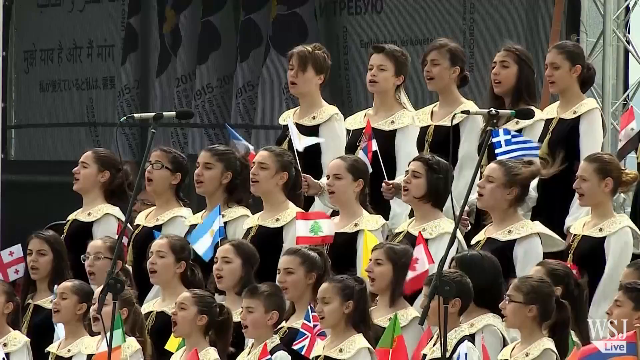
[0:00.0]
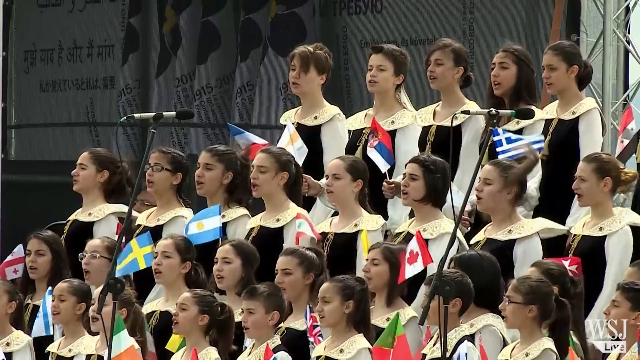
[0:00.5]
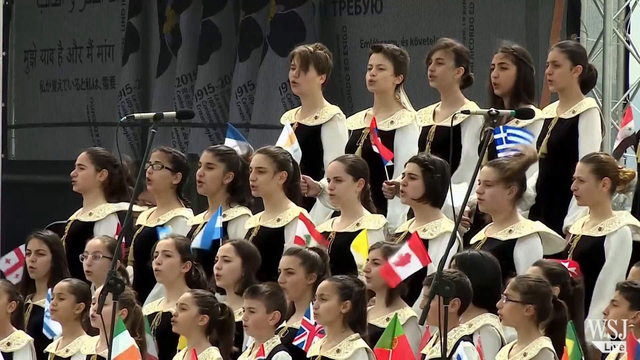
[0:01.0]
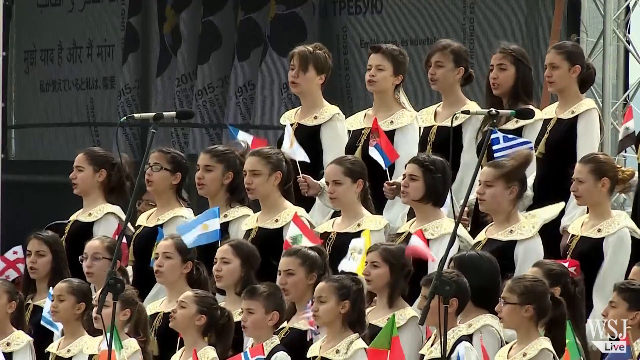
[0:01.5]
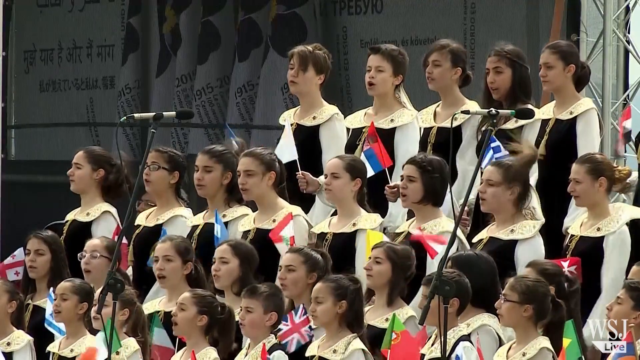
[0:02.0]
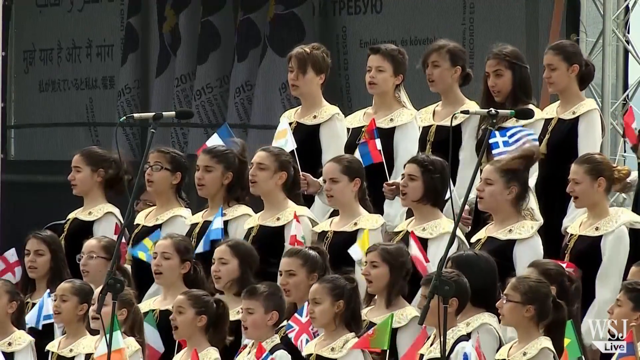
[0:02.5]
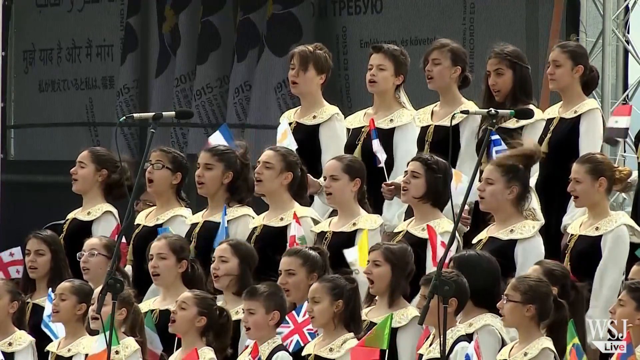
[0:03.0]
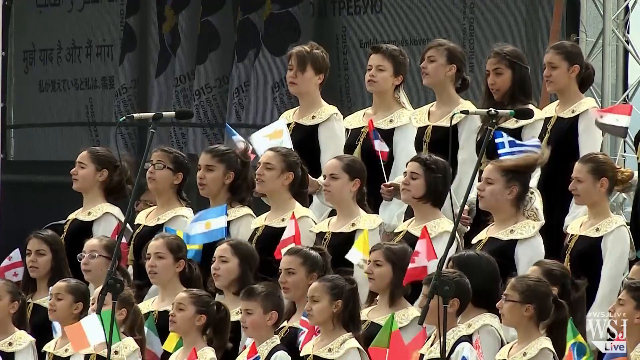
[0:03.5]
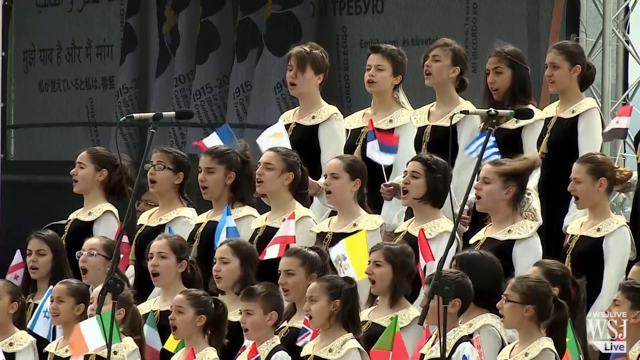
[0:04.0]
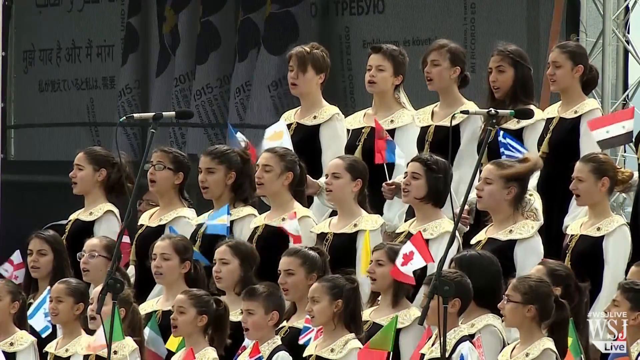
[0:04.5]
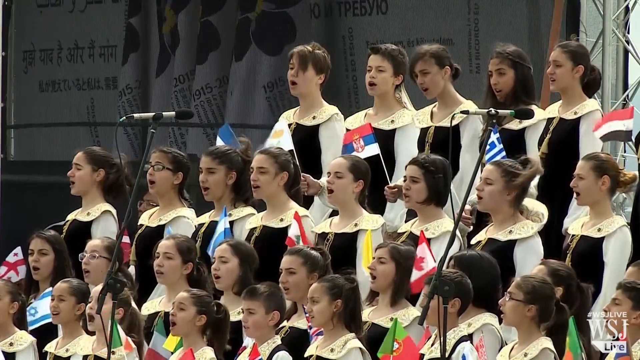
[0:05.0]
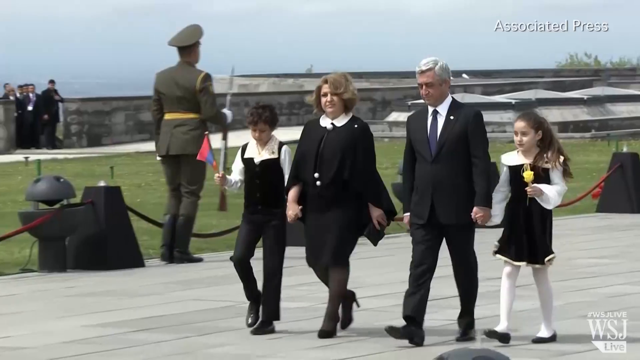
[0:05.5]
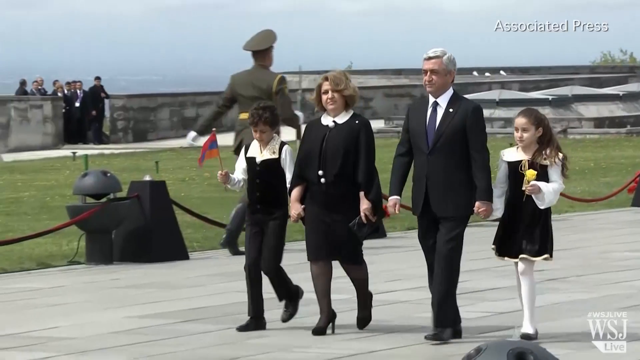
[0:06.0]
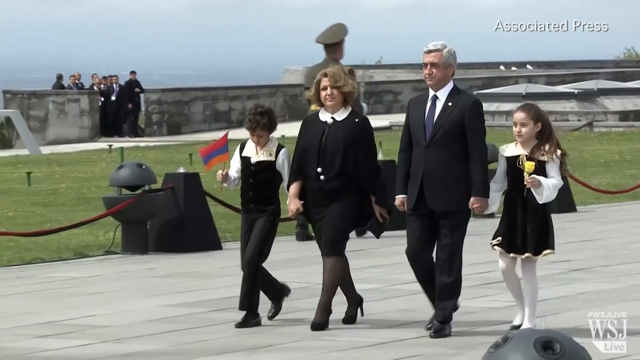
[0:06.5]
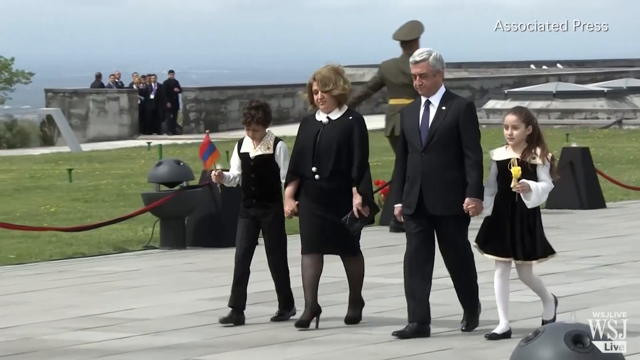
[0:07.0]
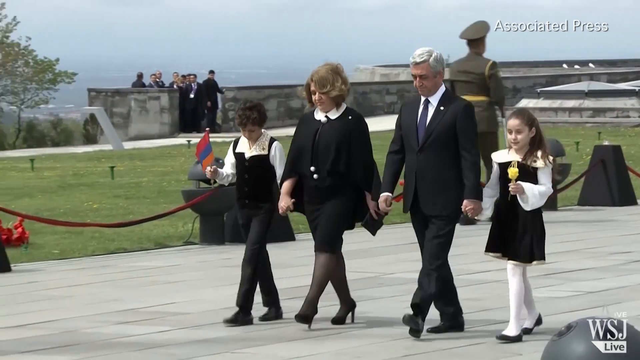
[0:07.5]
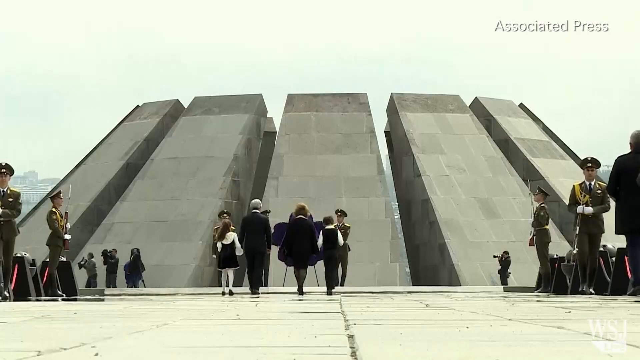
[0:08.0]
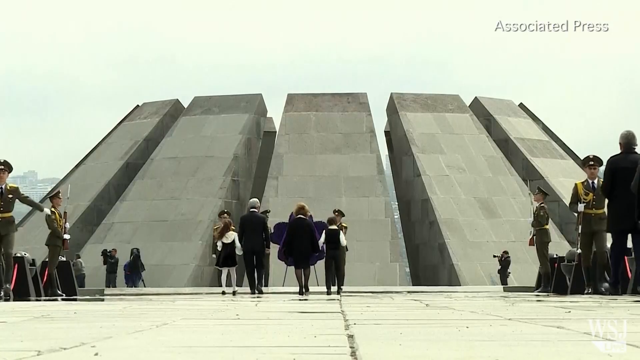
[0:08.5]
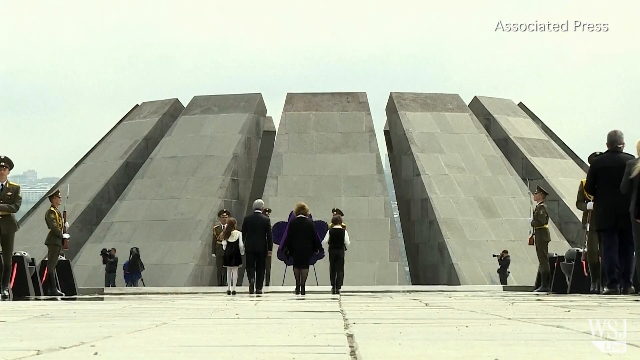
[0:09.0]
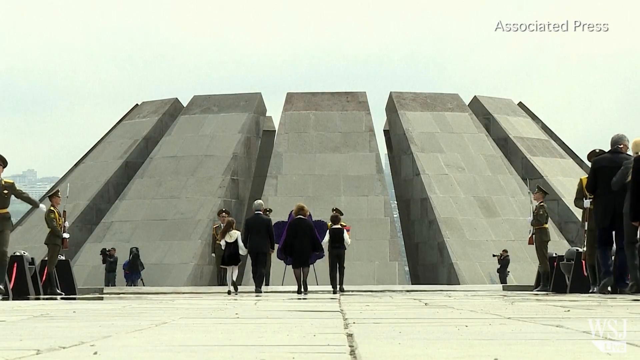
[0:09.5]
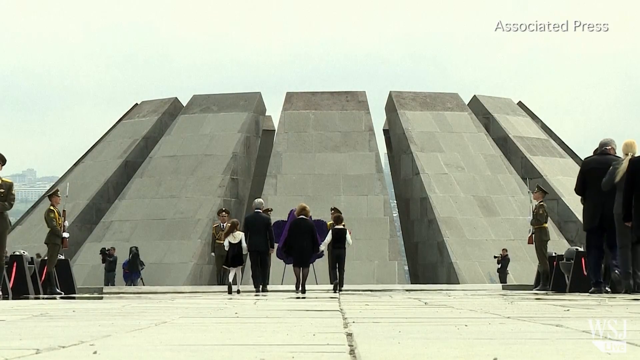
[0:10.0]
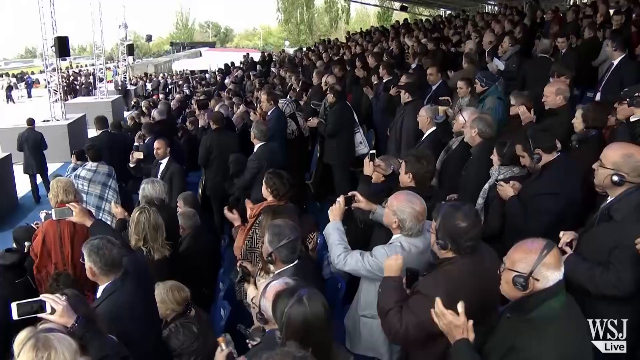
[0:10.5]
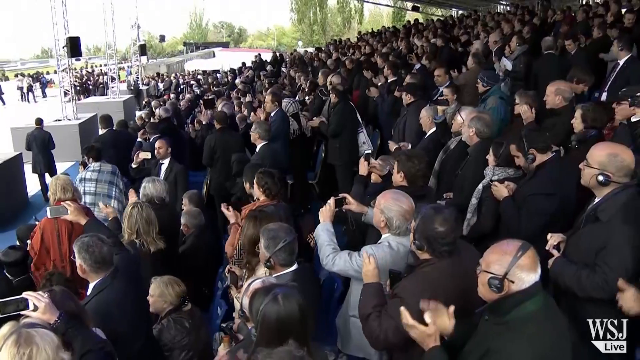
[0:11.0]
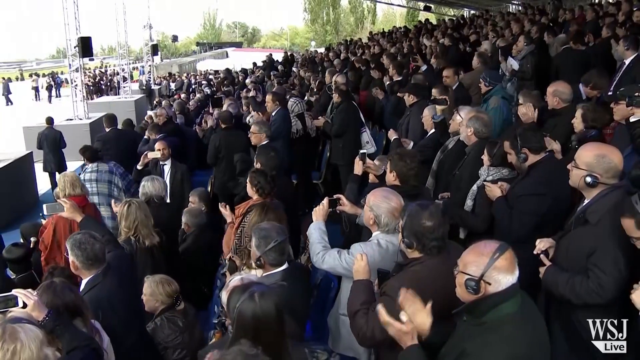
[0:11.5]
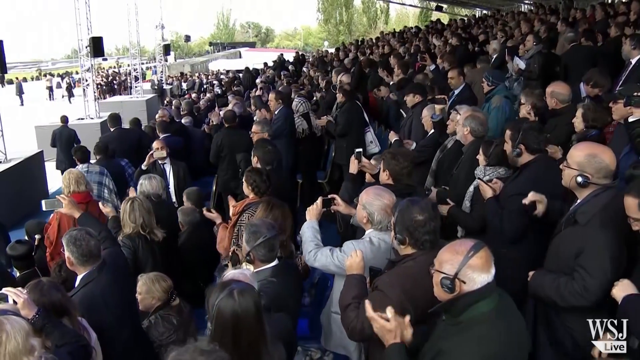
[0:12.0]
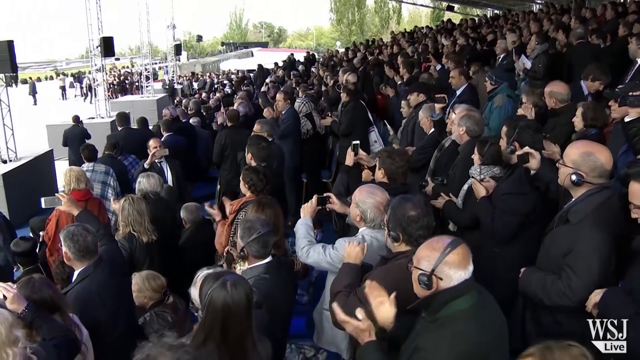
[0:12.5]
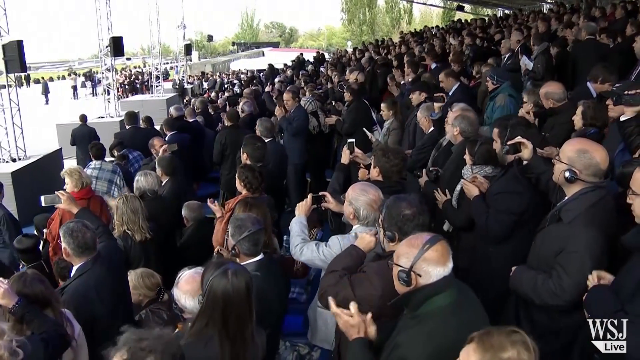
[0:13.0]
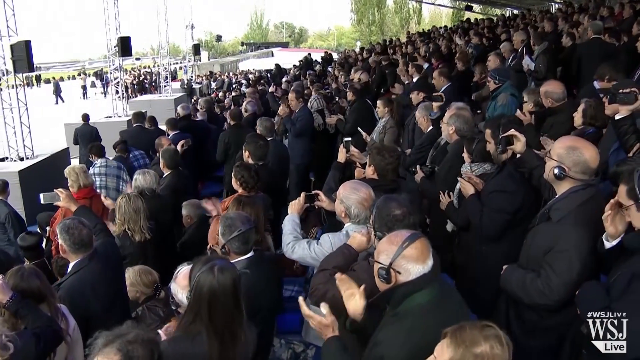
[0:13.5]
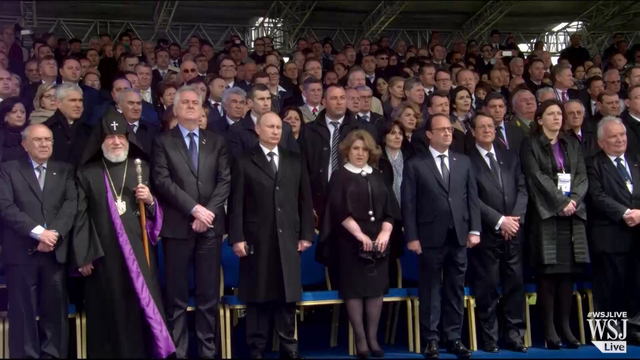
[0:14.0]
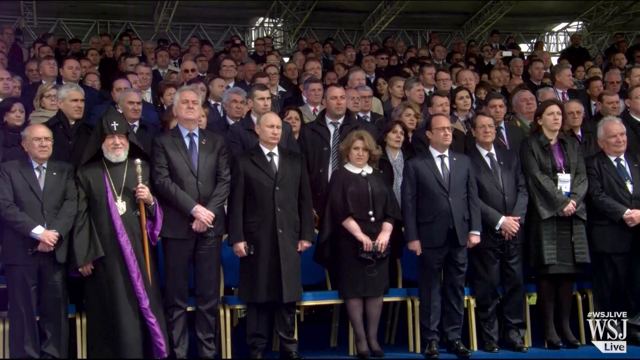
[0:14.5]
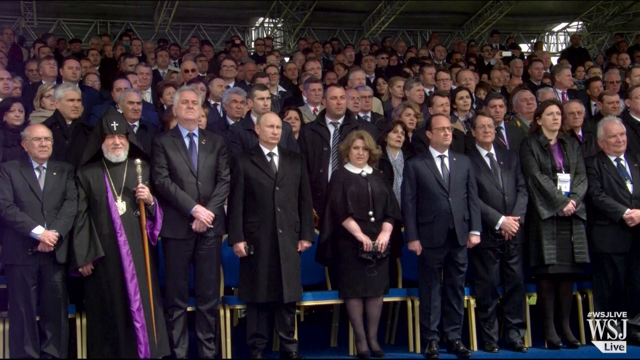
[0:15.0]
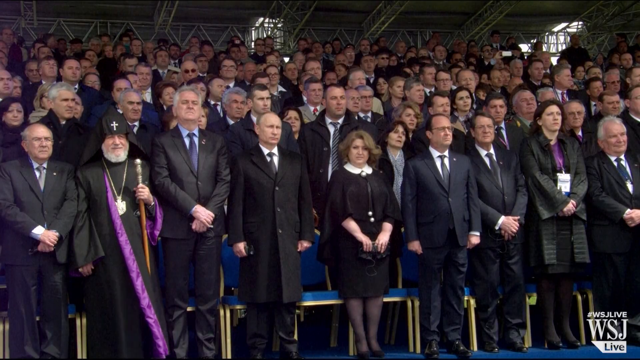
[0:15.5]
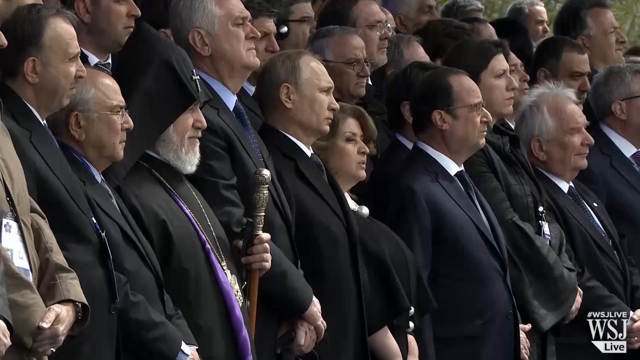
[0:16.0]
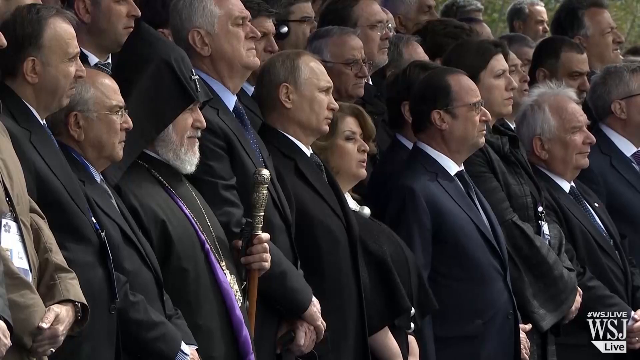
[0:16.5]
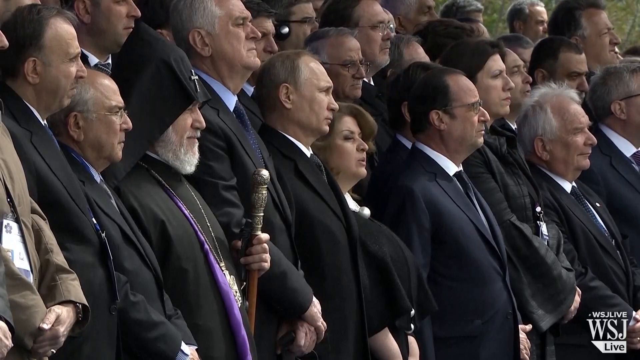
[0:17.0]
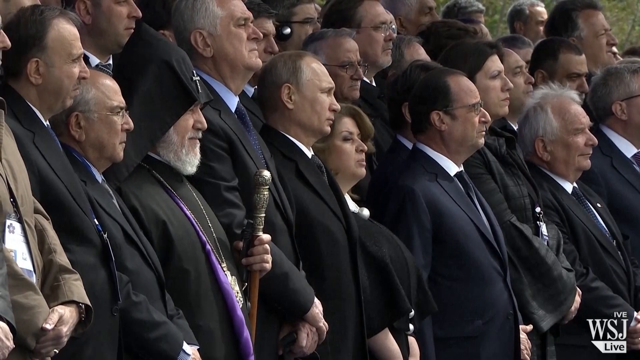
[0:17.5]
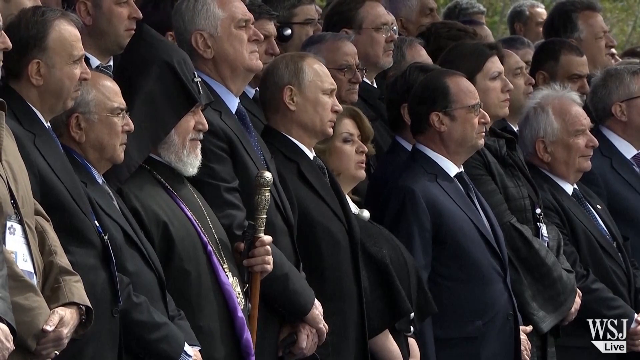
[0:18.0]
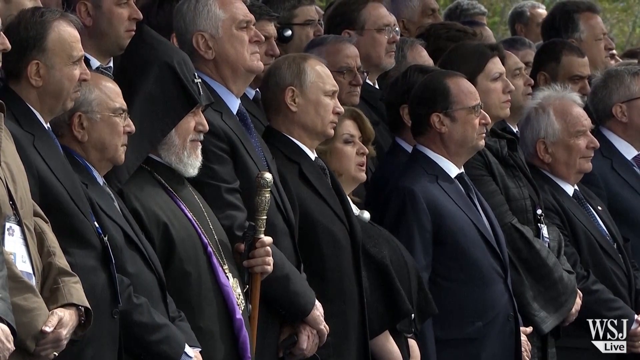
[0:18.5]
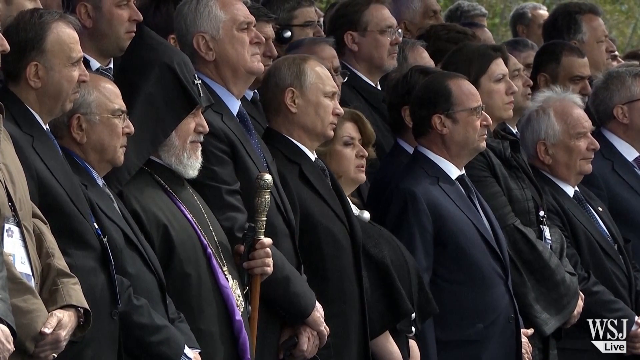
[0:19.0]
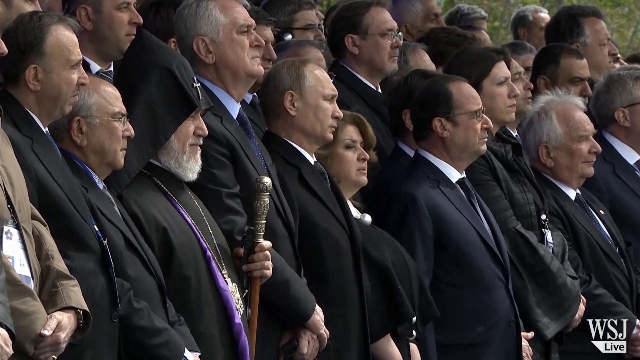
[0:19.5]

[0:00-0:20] Many young white females in white and black outfits stand in three rows, all appearing to sing, with two microphones sticking up to capture their singing. There are Canadian flags and white and blue flags. The scene switches to four people outside walking in a row toward some sort of monument with five or more huge square structures pointing up into the sky, with people on the left and right; it looks like something military. Next, the scene switches to the watching crowd: many people looking on at what appears to be a parade, clapping. Another scene follows in which one person in the middle is identified as President Putin of Russia, and the camera focuses on him for quite a while. It then switches back to the girls singing in the parade, and then to a man and a woman, apparently husband and wife, with one child on each side of them, walking toward the monument.